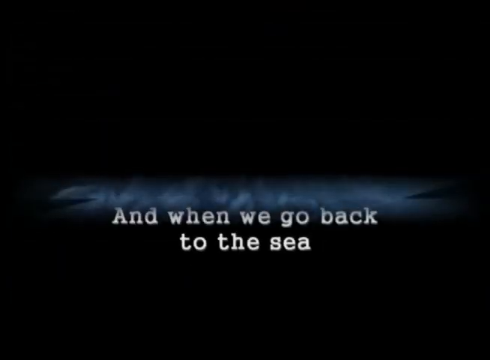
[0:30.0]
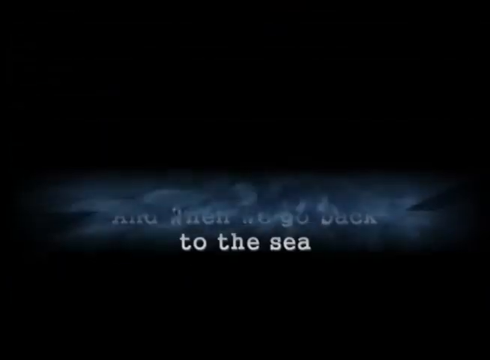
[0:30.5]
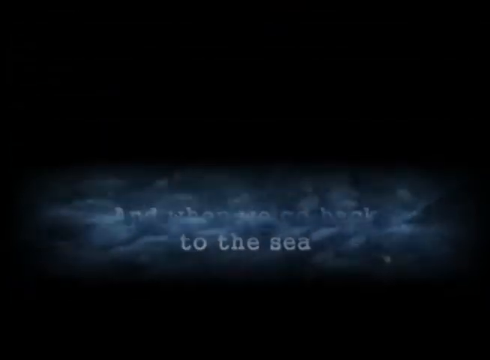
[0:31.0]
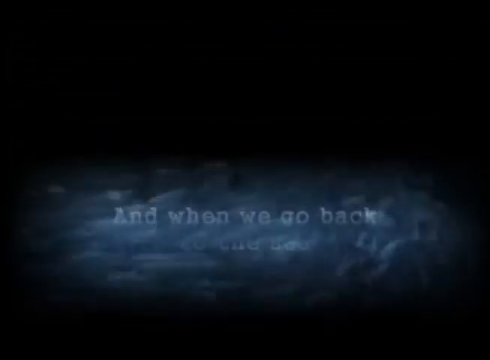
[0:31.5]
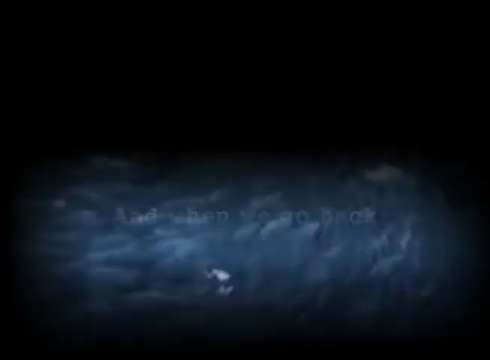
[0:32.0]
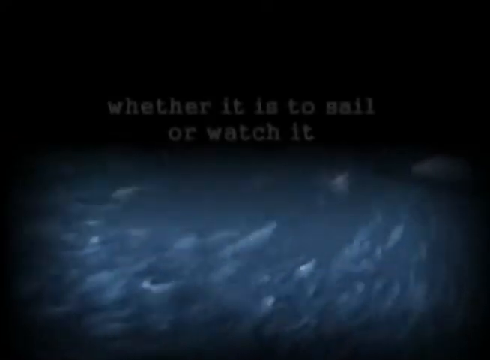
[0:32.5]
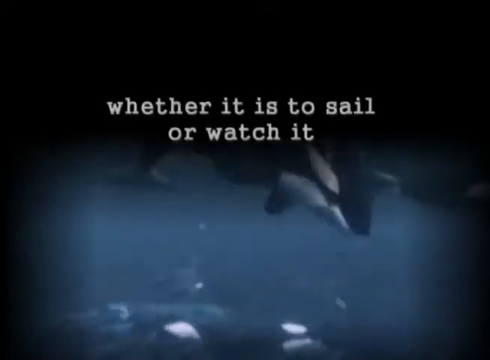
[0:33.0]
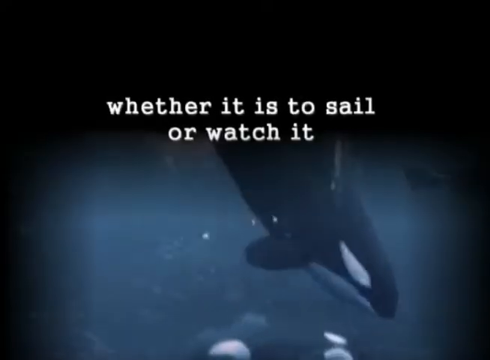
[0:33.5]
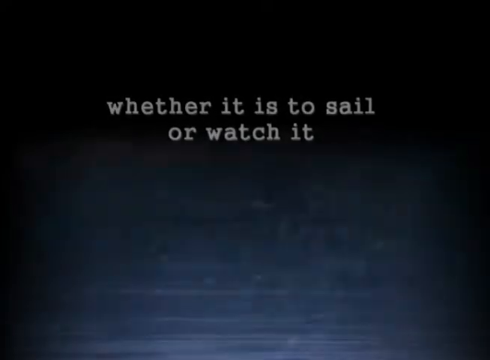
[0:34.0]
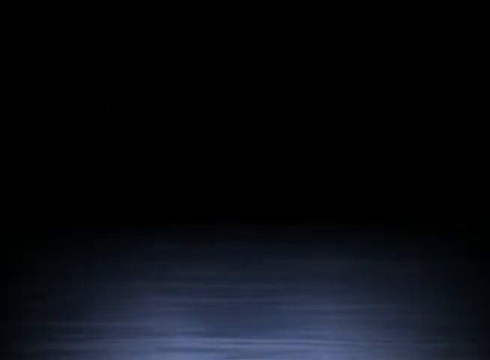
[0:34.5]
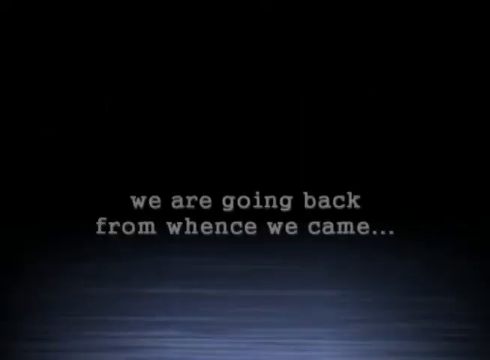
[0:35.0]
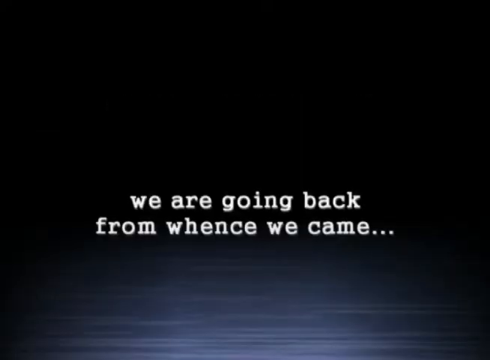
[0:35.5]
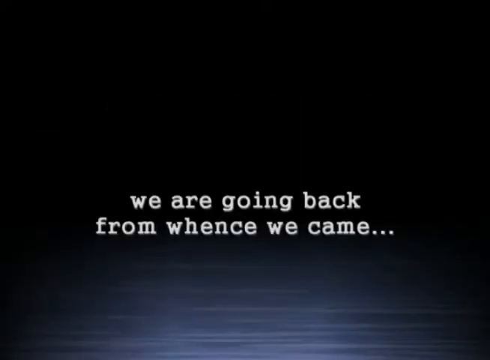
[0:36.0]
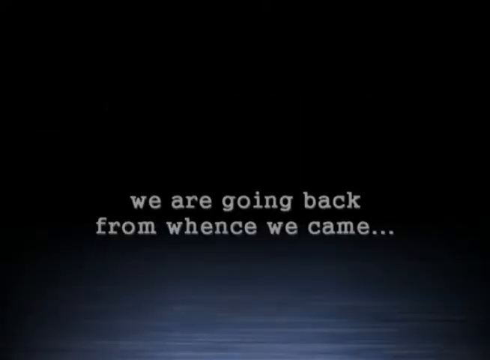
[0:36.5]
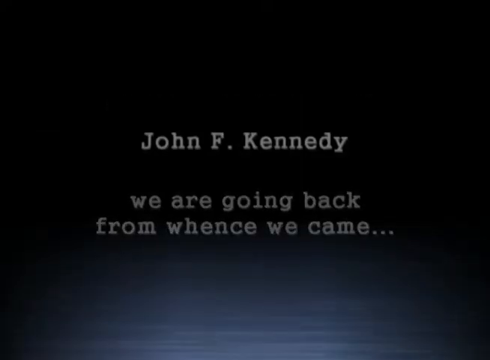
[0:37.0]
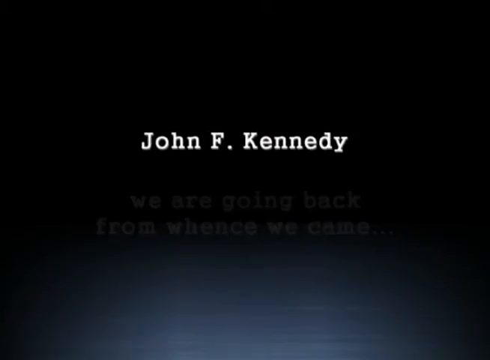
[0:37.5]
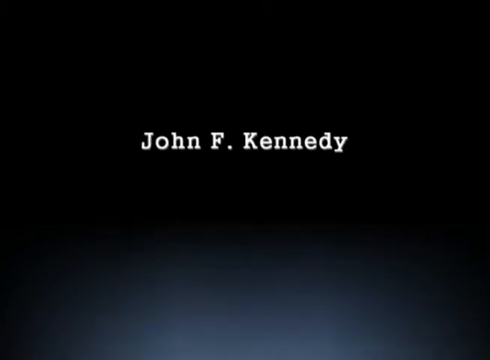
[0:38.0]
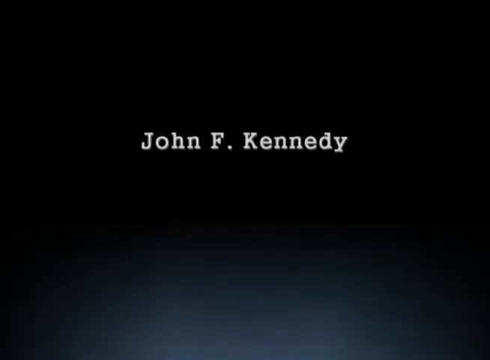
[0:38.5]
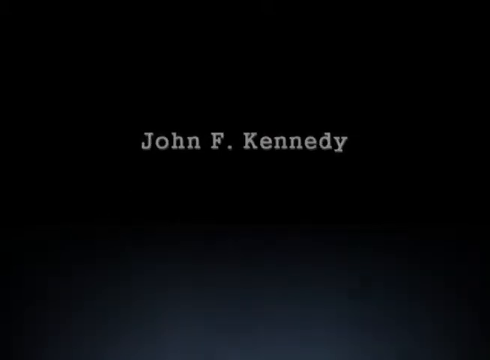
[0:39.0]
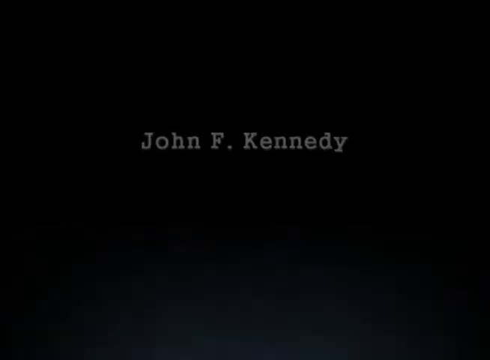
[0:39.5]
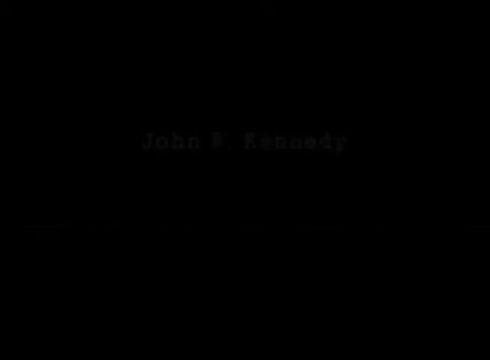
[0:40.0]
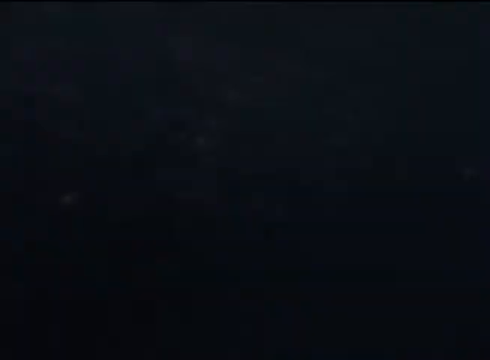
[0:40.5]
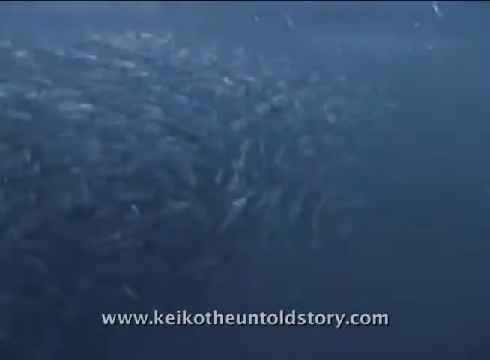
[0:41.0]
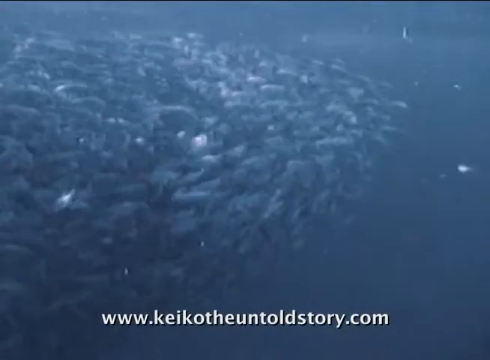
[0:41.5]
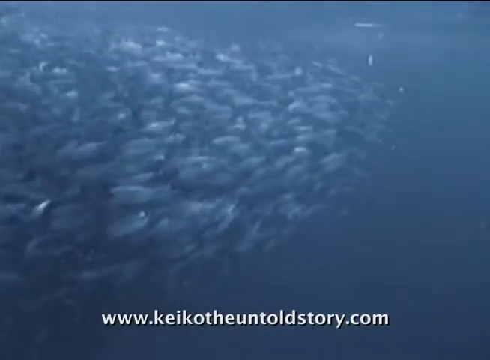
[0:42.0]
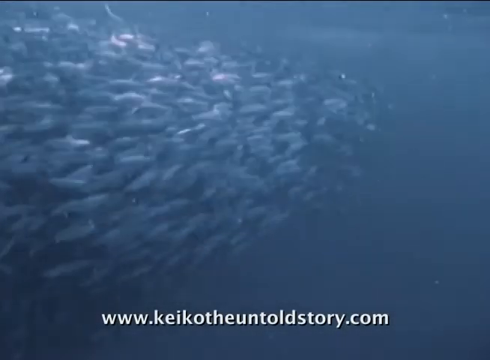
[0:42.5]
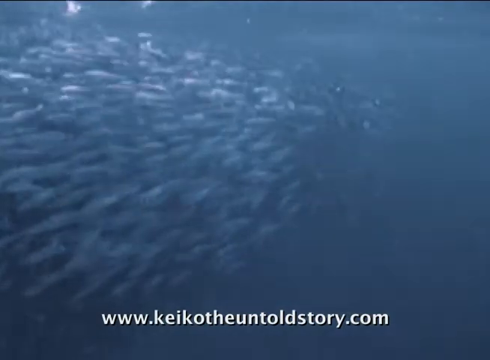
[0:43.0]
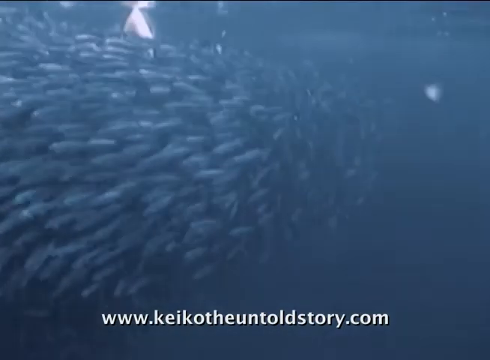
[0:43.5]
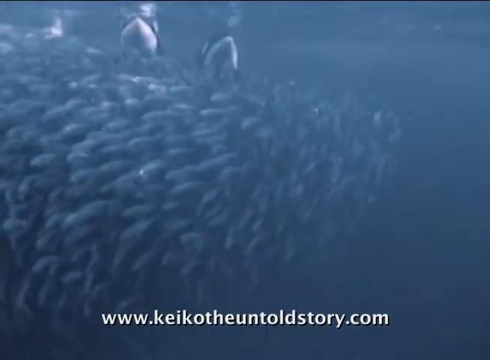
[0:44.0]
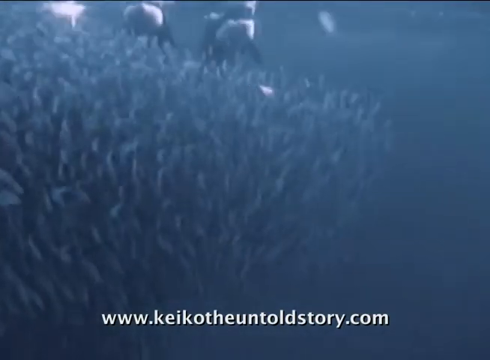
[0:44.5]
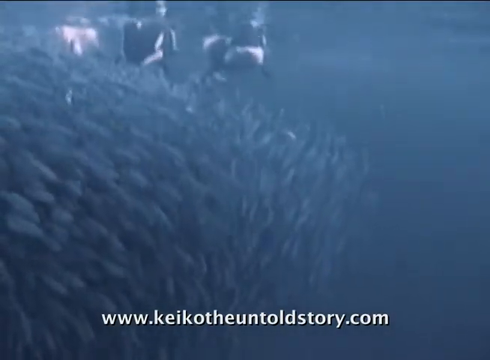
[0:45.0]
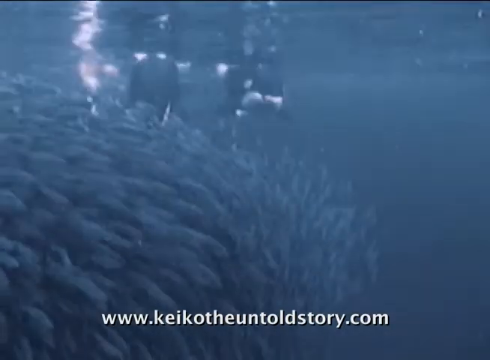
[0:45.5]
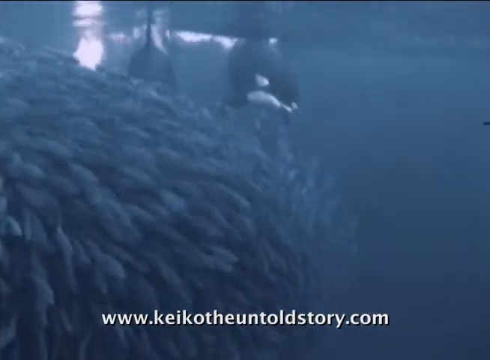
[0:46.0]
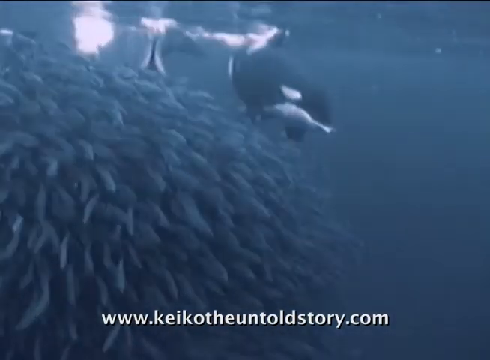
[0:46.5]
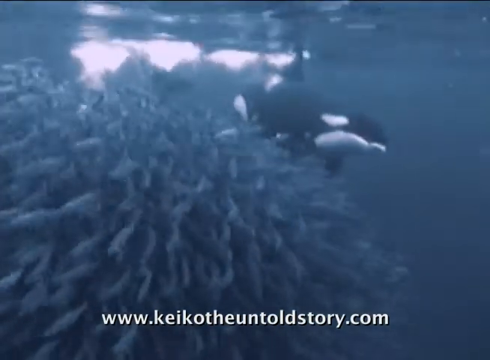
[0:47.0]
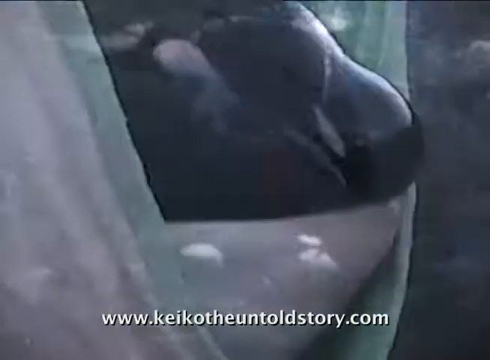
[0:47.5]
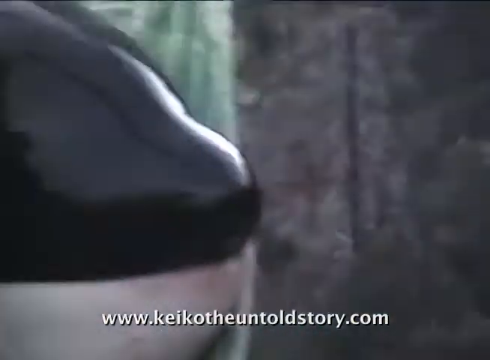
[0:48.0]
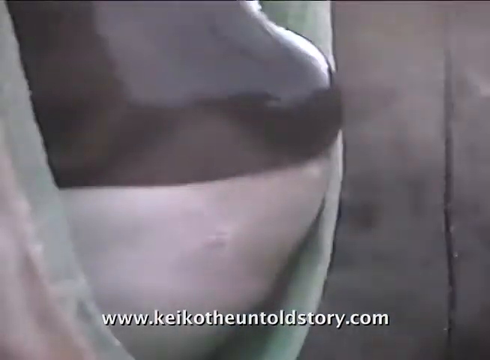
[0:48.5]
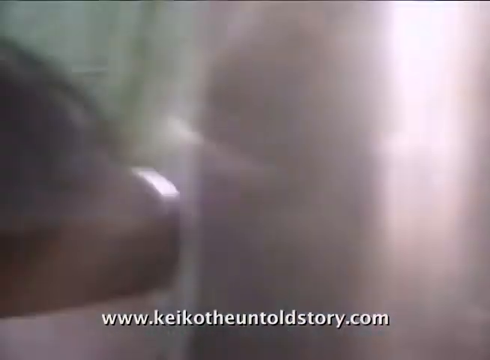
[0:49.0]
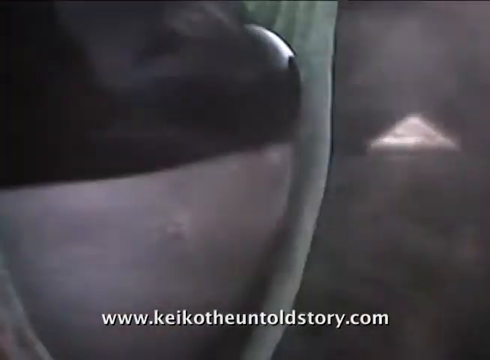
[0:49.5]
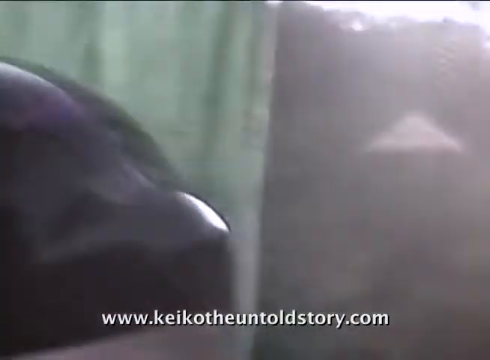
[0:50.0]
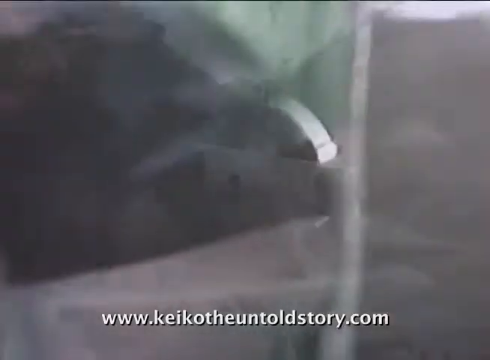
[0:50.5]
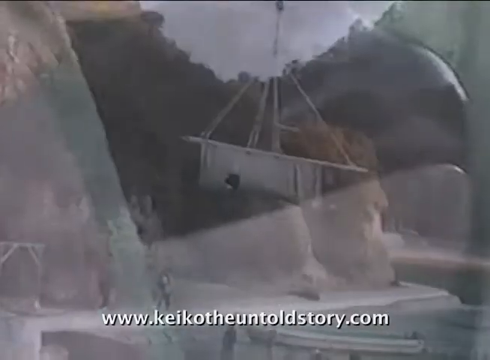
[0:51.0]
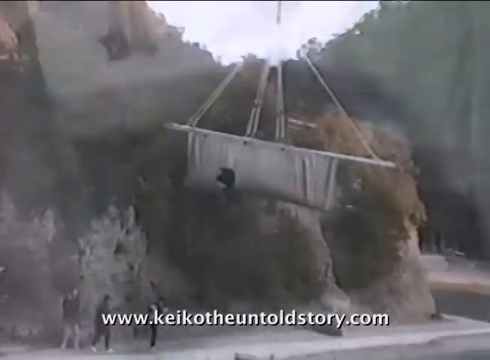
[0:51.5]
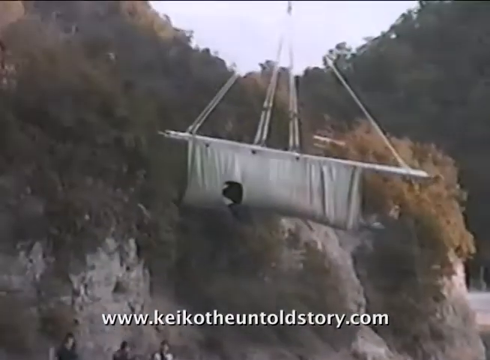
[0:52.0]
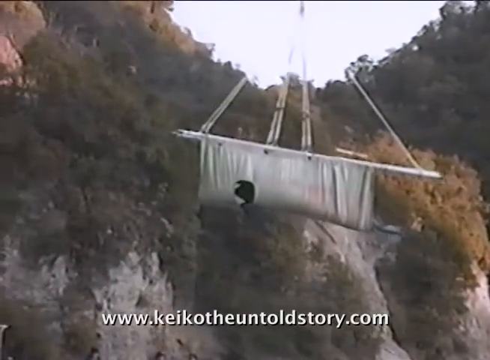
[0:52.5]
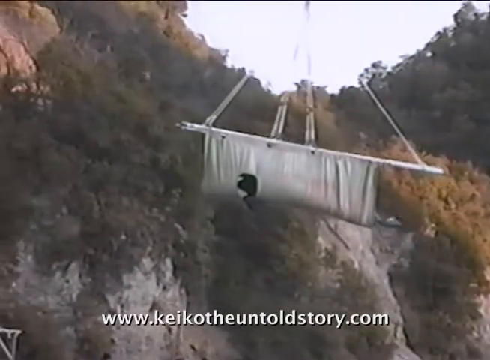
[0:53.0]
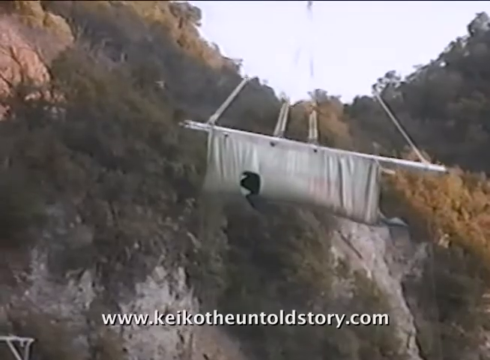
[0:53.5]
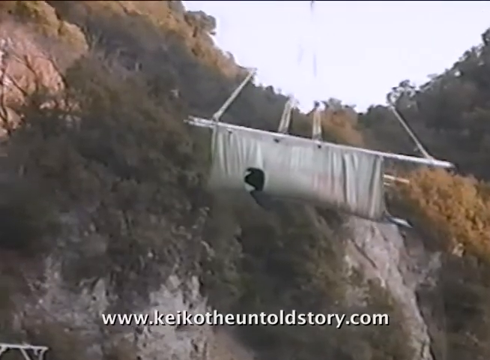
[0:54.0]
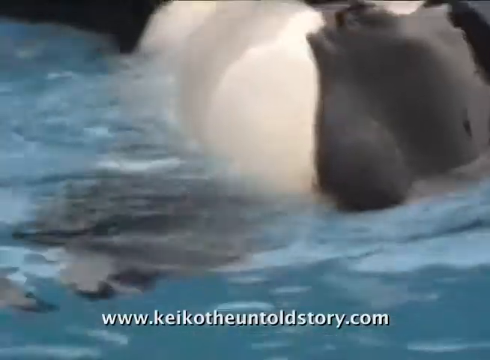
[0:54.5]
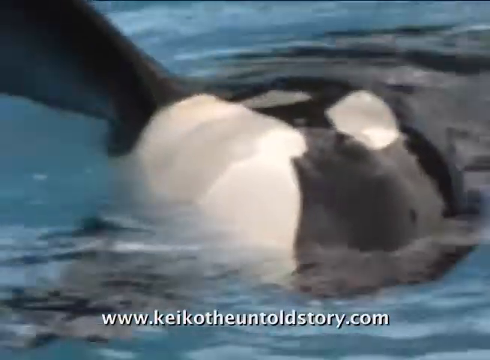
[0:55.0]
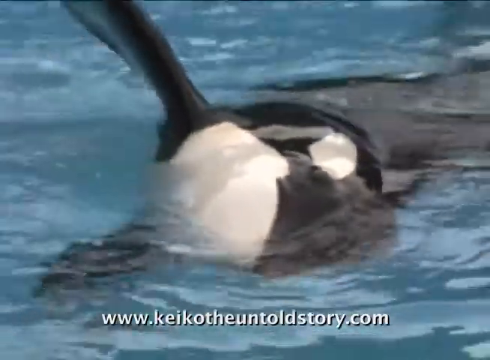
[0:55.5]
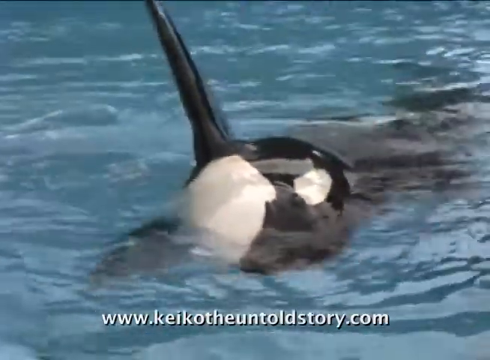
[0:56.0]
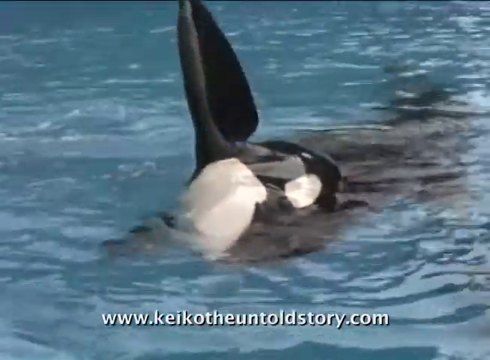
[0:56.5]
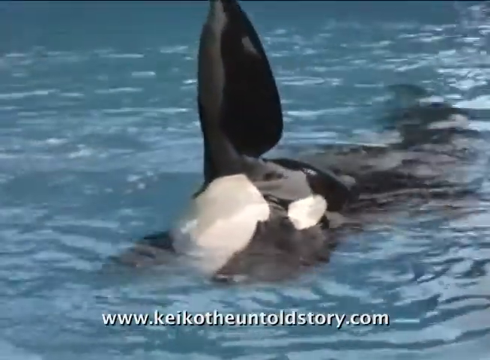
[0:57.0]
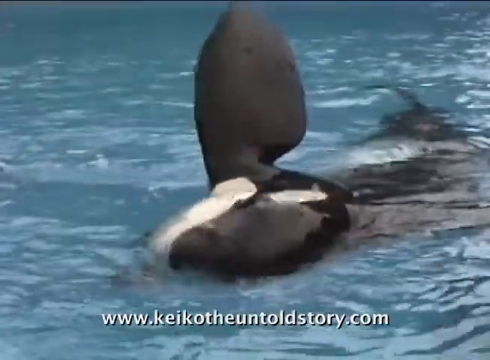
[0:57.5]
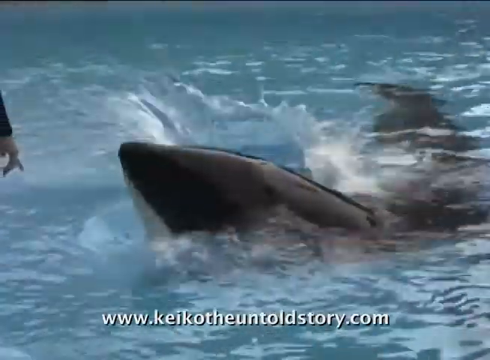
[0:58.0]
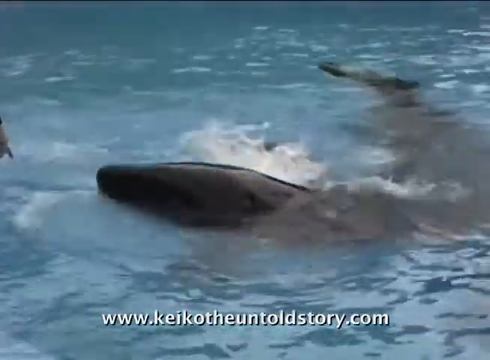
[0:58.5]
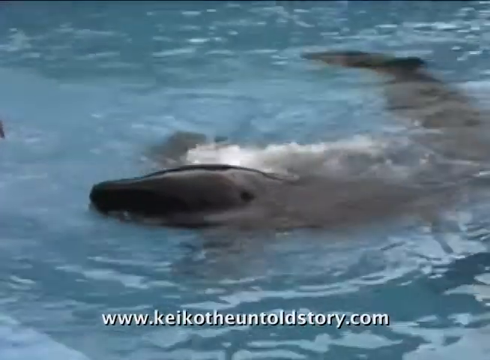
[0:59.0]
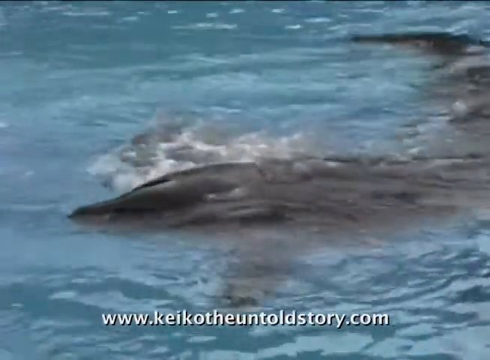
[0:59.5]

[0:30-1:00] A thin blue image is in the middle of the screen, with the text "and when we go back to the sea" below it. The image expands to show a silver and blue school of fish against a black background. White text above it reads "whether it is to sail or watch it," and an orca enters the shot, swimming down. The shot switches to a black screen with shimmering water at the bottom; above the water, white text reads "we are going back from whence we came..." The shimmering water blurs into grayness, and white text in the middle of the screen says "John F. Kennedy." The gray image disappears, leaving a black screen. A new silver and gray shot shows a massive school of small fish, with white letters at the bottom reading "KEIKOTHEUNTOLDSTORY.COM." The fish form a bait ball, circling, as two orcas appear above it; one orca swims through the bait ball while the other continues around the outside. A close-up shows an orca's black top of the head and white underside, separated by its mouth; the orca is in a green sling, and the sun is reflecting off the camera. The sling with the orca inside is then lifted through the air against a background of a cliff and a washed-out sky, with white lettering at the bottom reading "www.keikotheuntoldstory.com." Next, an orca is on its side in clear blue water, one fin sticking out of the water, its white and black pattern visible. The shot pulls out to show the orca lifting its fin in the air and slapping it on the water; the orca is in a pool, and a person's hand is on the left of the screen. After the slap, the shot switches to a black background with white lettering that says "to the sea."